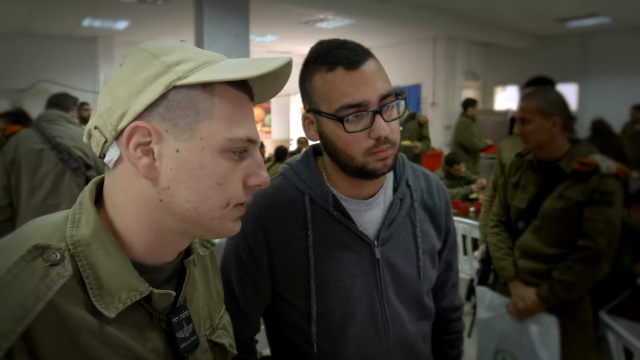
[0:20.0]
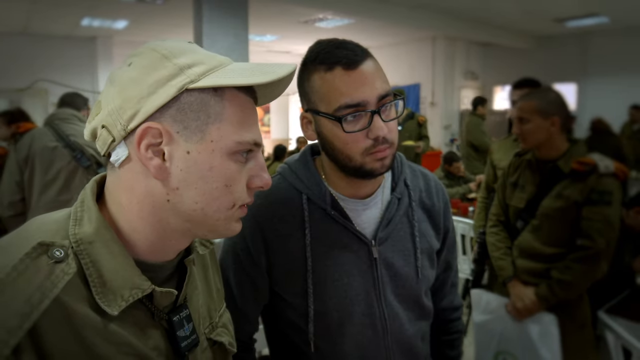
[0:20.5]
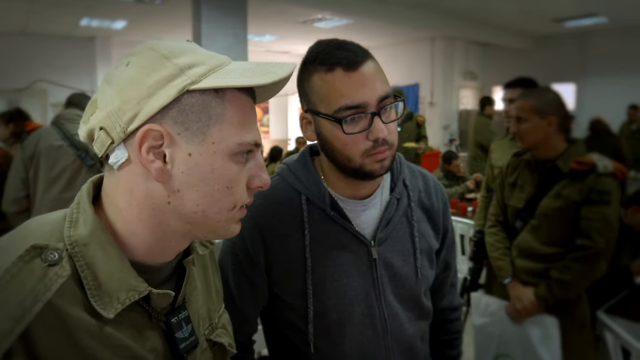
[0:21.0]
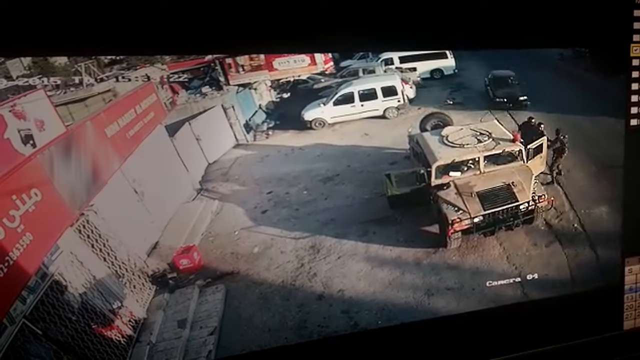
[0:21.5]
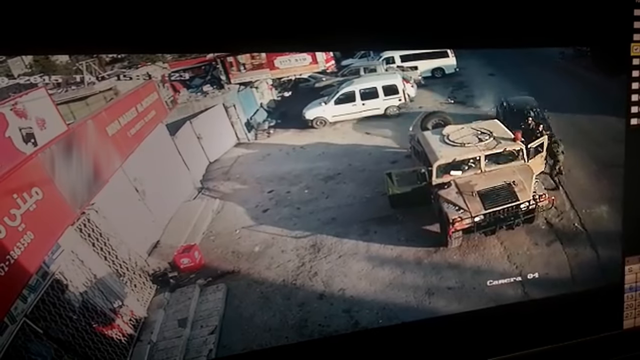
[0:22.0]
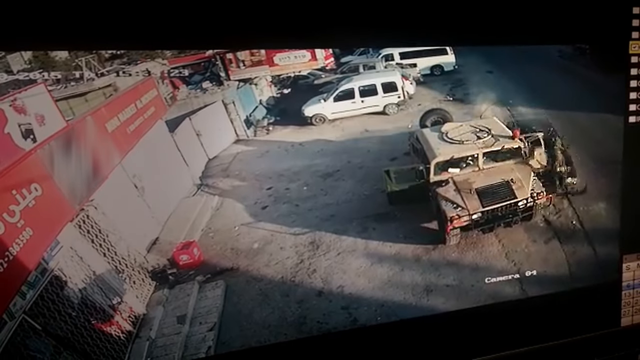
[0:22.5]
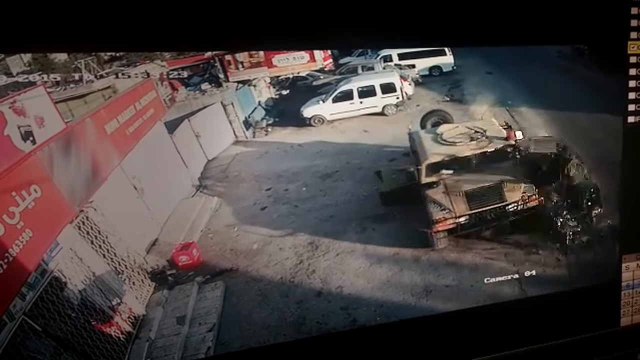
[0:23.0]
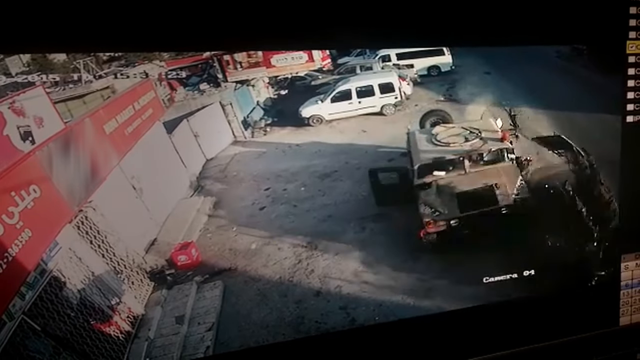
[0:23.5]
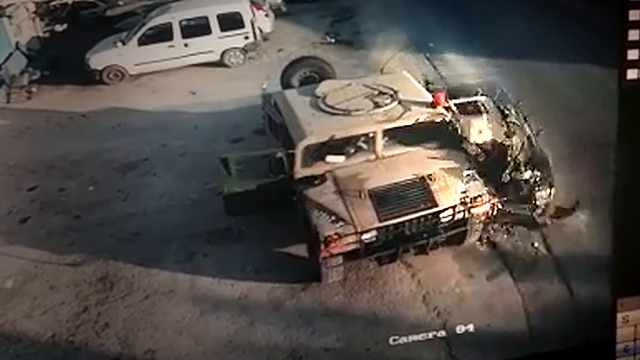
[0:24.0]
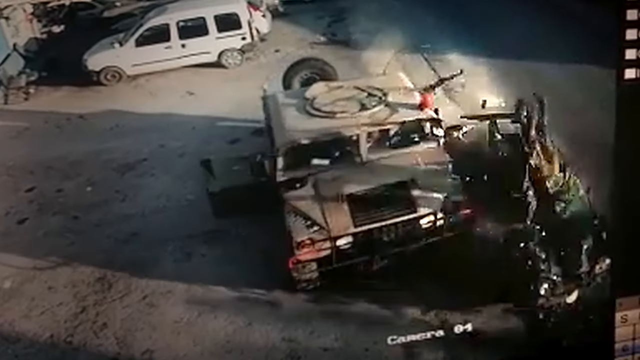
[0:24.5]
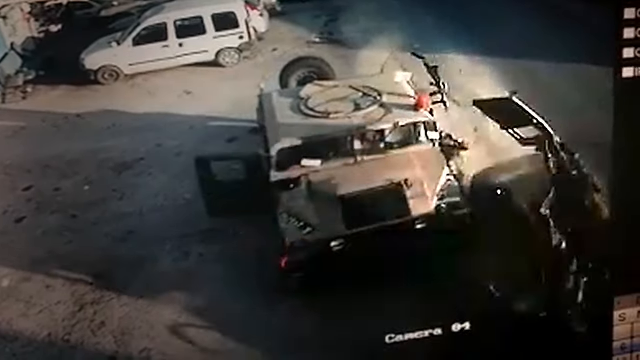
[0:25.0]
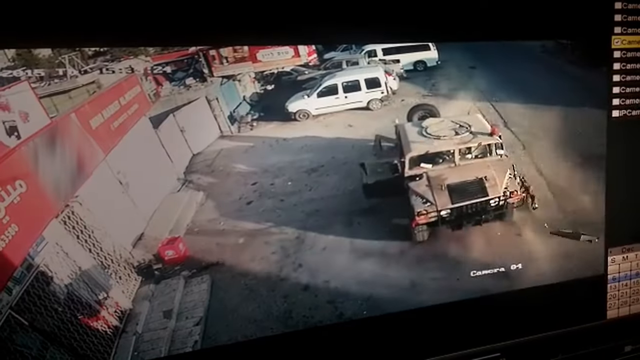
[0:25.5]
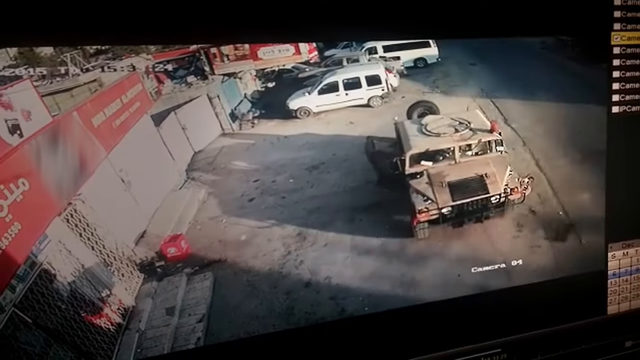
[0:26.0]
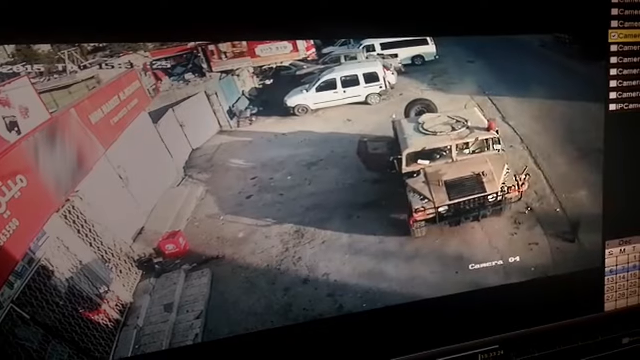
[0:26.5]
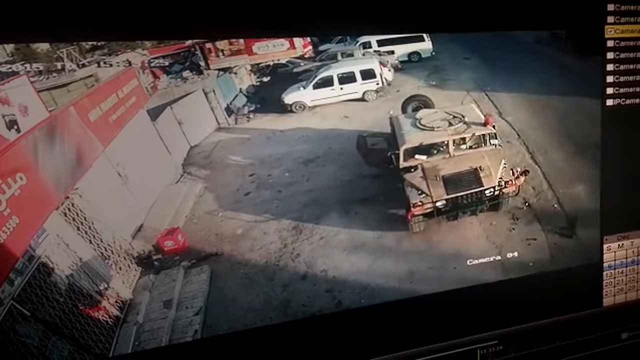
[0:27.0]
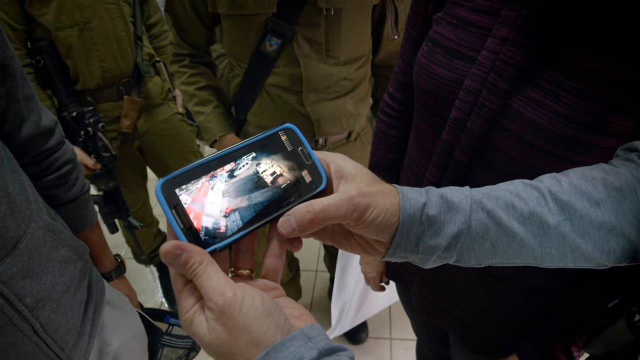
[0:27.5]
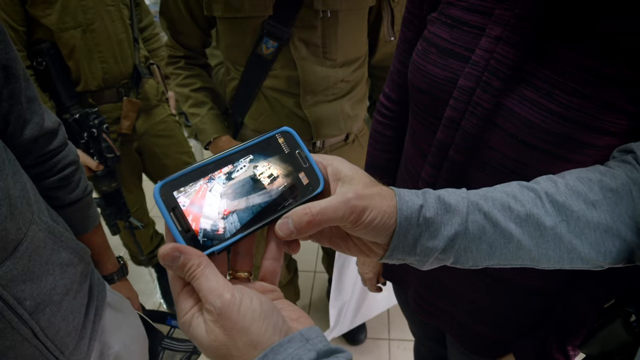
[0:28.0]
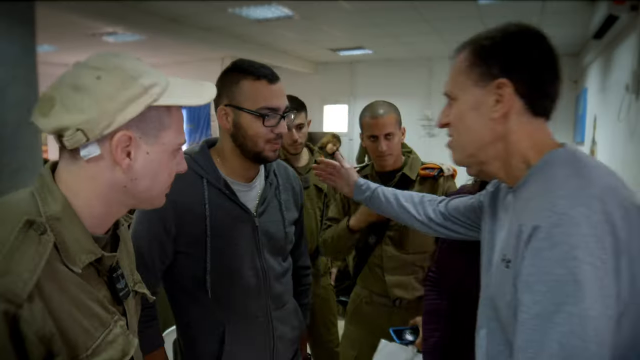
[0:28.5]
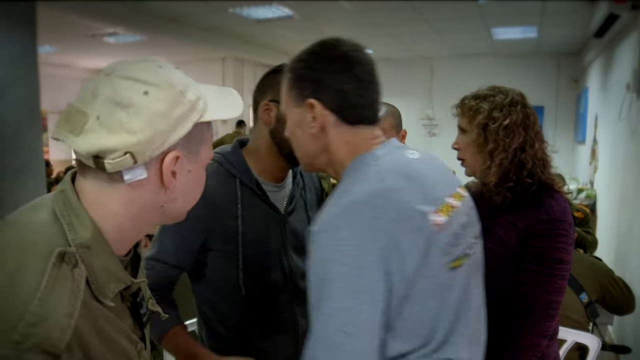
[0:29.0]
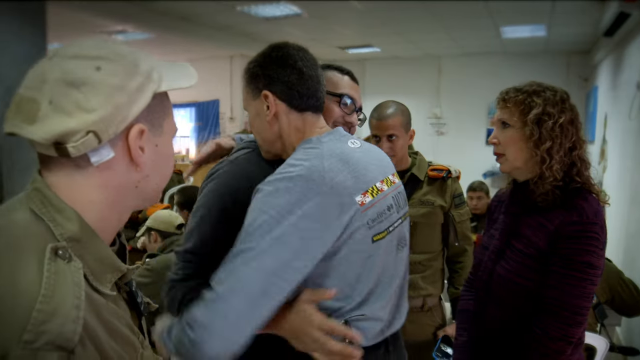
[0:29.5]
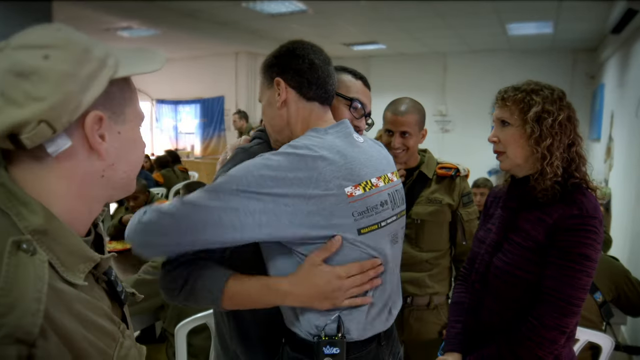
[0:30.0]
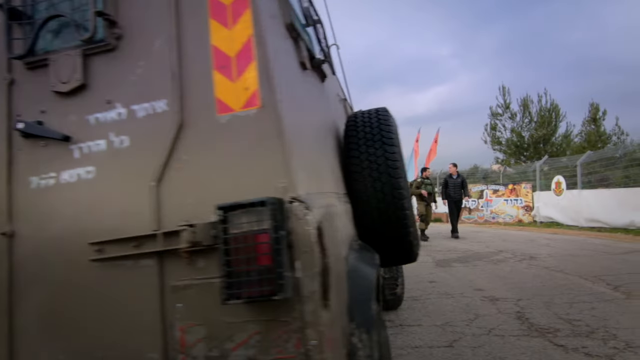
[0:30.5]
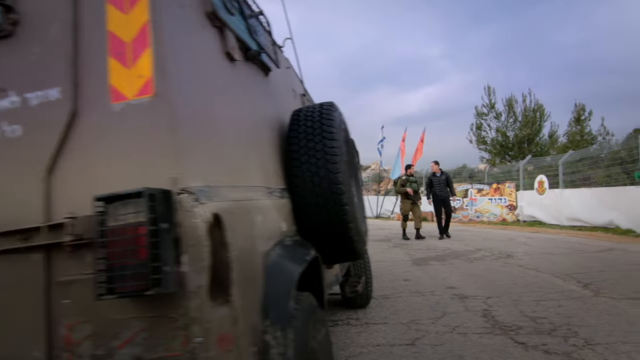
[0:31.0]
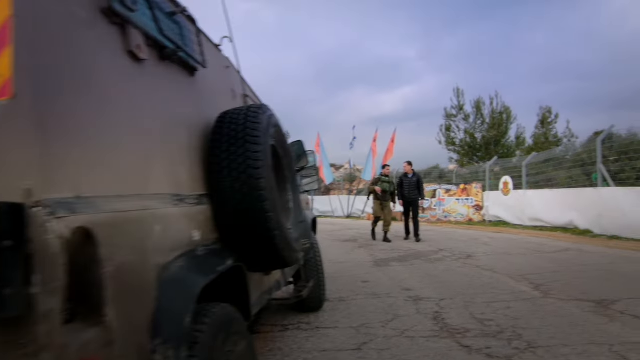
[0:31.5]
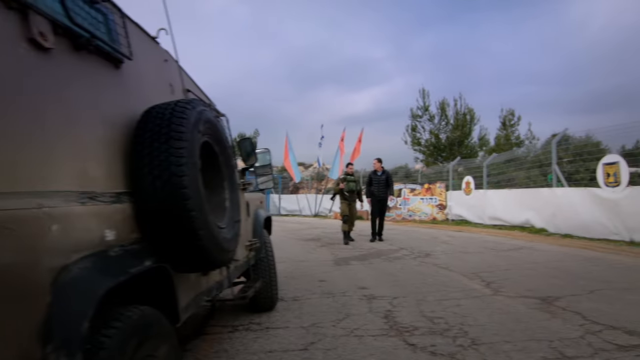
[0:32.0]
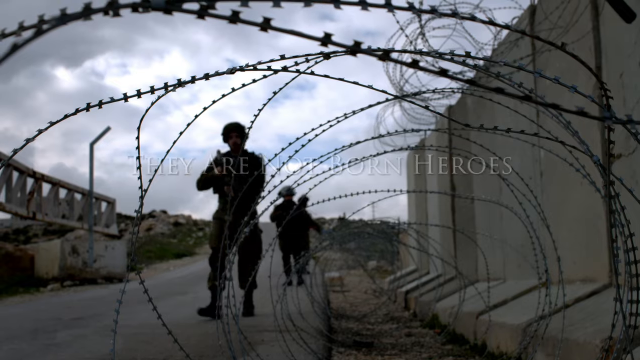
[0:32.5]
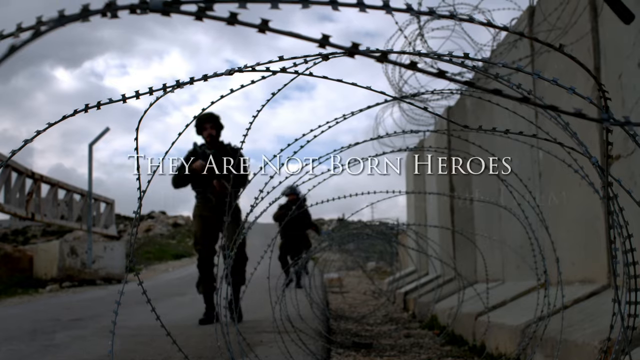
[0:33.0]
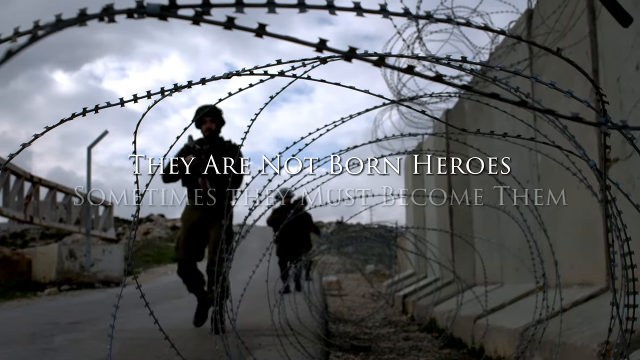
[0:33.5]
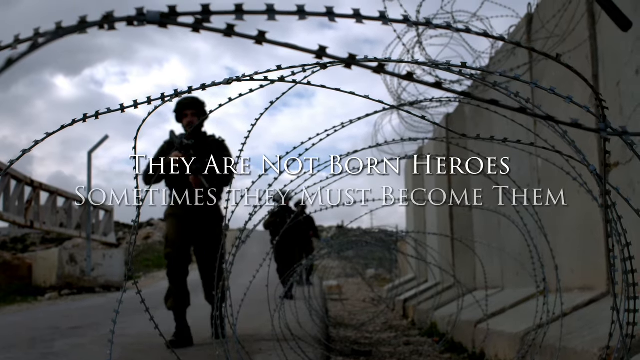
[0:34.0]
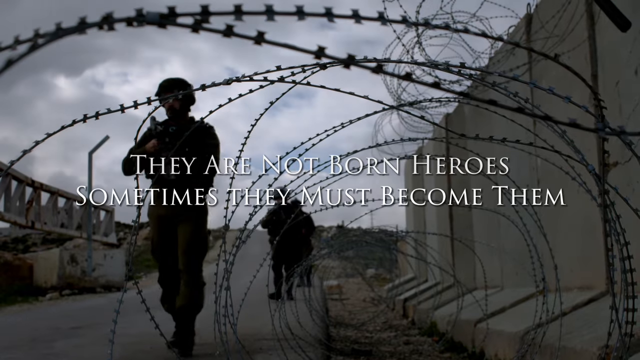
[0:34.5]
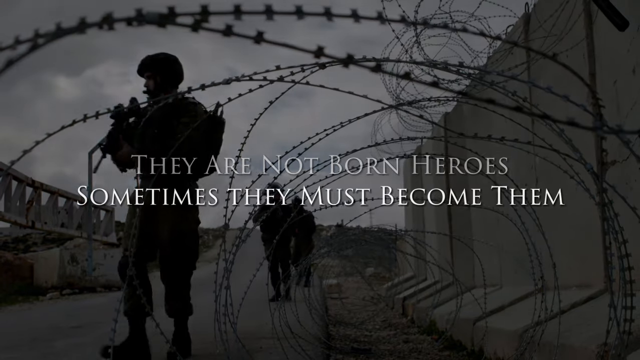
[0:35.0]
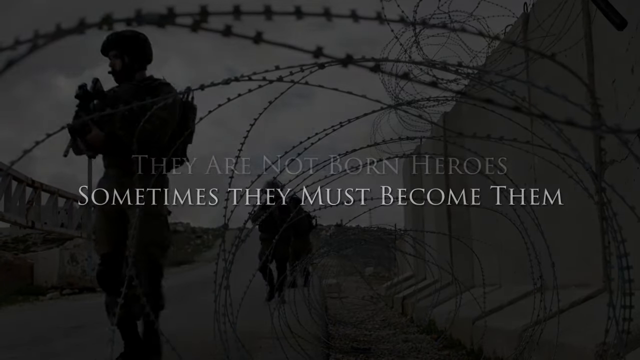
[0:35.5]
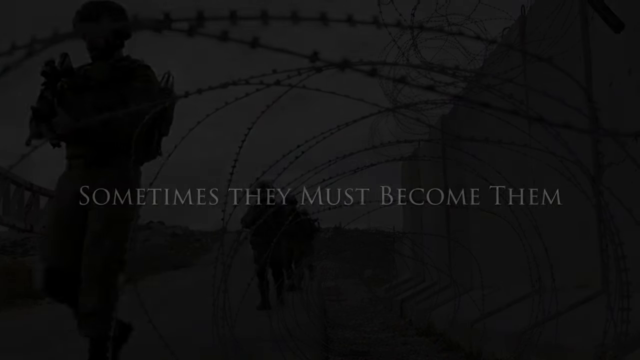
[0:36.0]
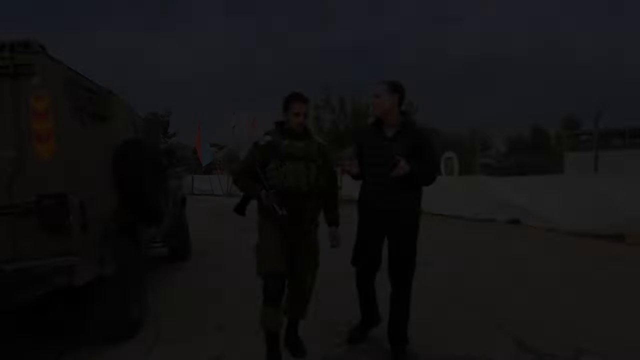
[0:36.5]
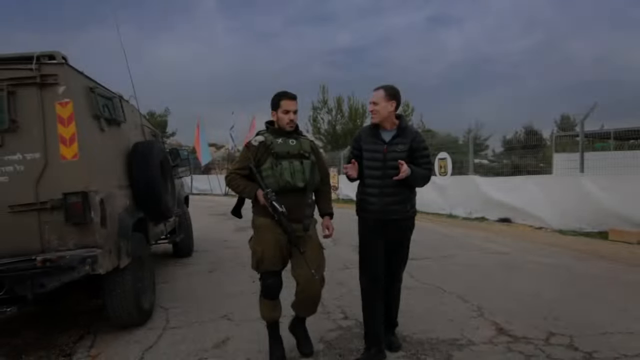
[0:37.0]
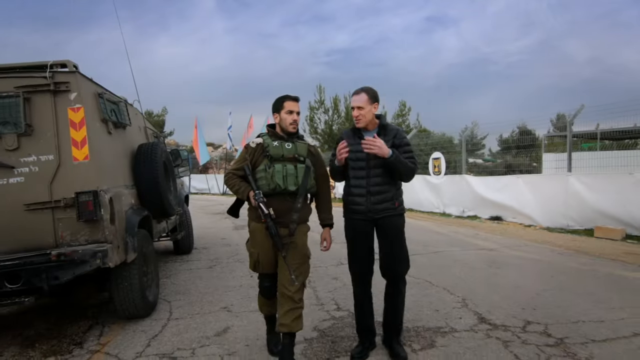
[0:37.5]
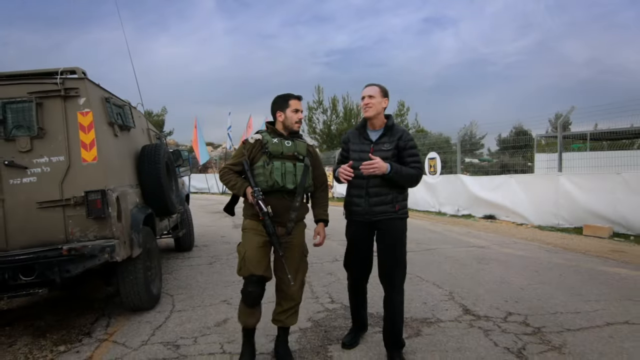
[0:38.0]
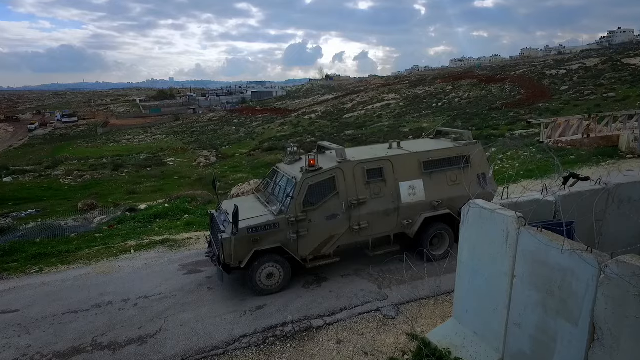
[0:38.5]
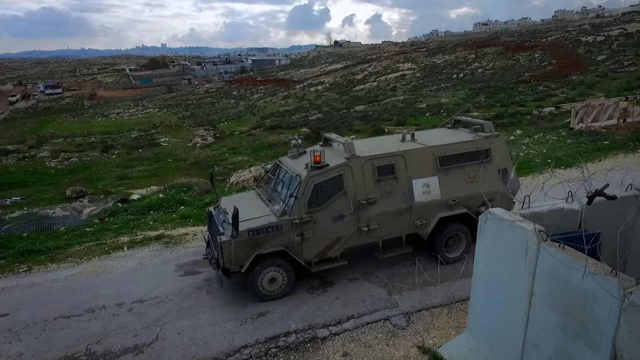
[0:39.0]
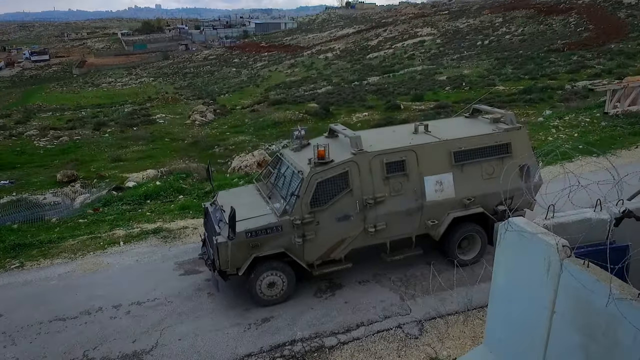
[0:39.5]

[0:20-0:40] The Caucasian man, on the right, wears a beige hat and military fatigues, and the Middle Eastern man standing next to him has dark hair, black-rimmed glasses and a blue zip-up hoodie. The view switches to something like a street-corner camera looking downward at a Humvee, a military vehicle, and a car comes in on the right-hand side of the Humvee, crashing into it and making the side kind of explode. The same two people appear again, the man in fatigues and the Middle Eastern man in the hoodie, and someone wearing a long-sleeved light blue shirt steps in and hugs the Middle Eastern man. Next comes a camera angle of a Humvee with two people walking and talking. A shadowy image follows of military people in full gear, with the camera looking through razor wire, and text reads "they are not born heroes sometimes they must become them." A man in a puffer jacket then walks alongside Major Geno, speaking with him as they walk along a sidewalk, kind of a dusky Middle Eastern sidewalk with dirt and dust all over the place.